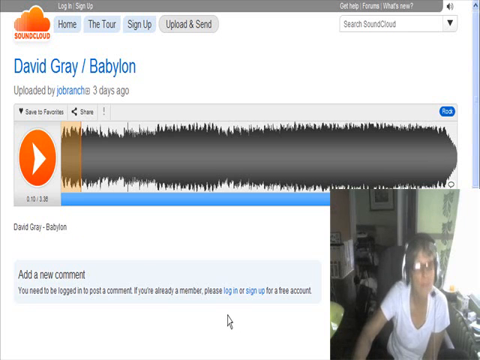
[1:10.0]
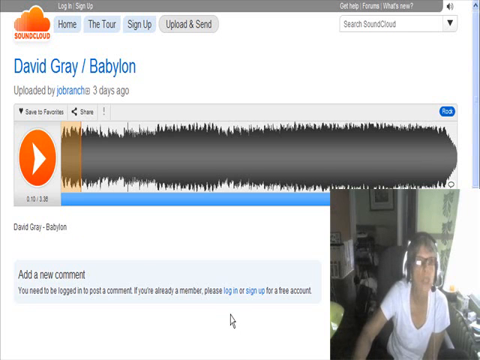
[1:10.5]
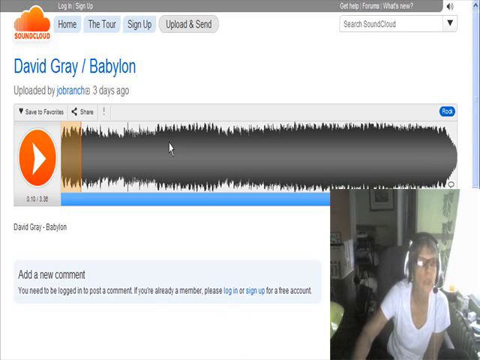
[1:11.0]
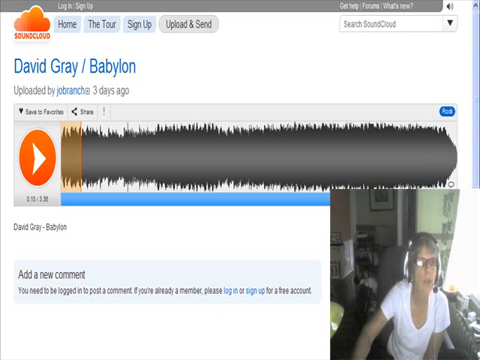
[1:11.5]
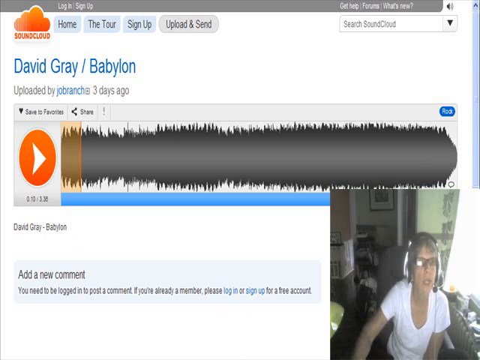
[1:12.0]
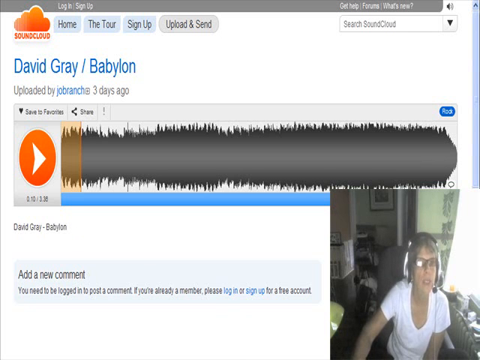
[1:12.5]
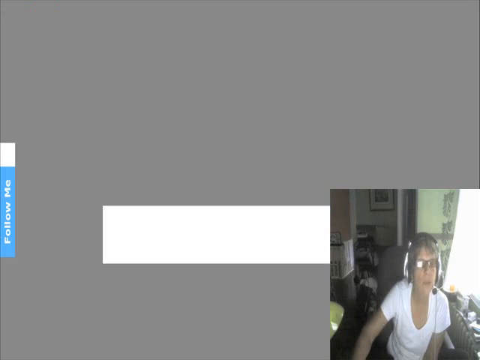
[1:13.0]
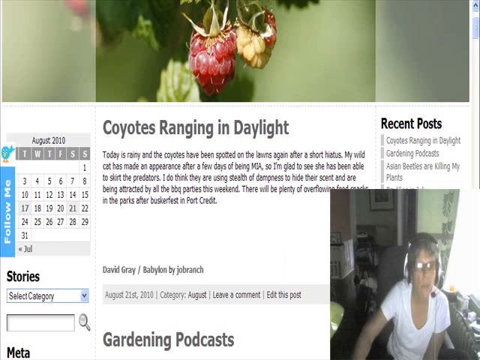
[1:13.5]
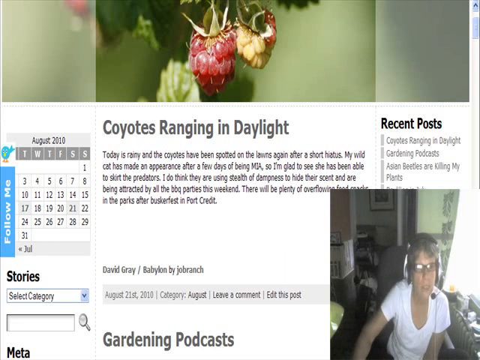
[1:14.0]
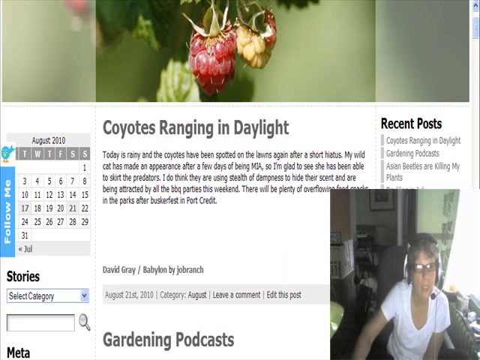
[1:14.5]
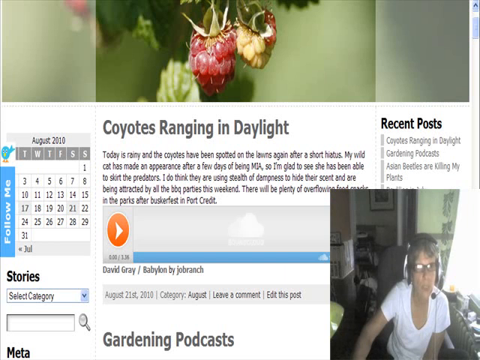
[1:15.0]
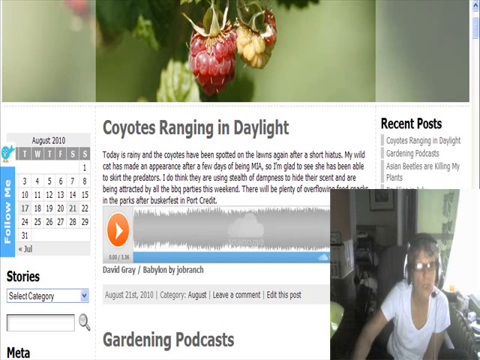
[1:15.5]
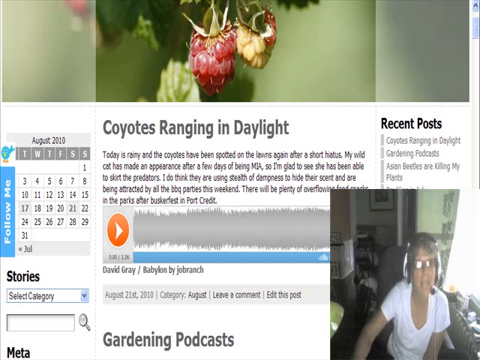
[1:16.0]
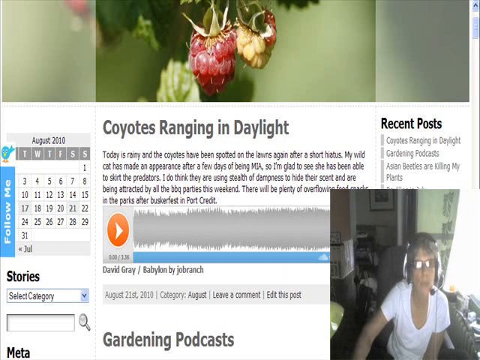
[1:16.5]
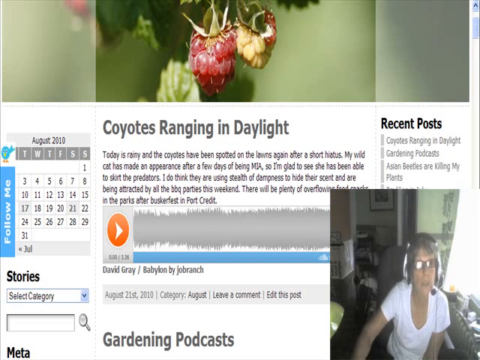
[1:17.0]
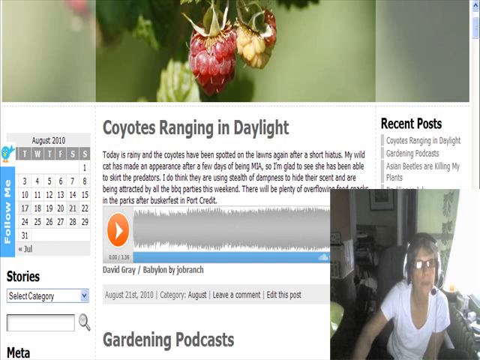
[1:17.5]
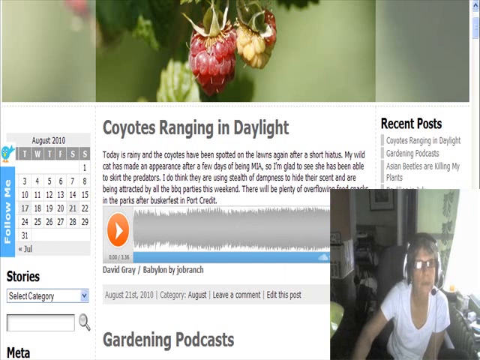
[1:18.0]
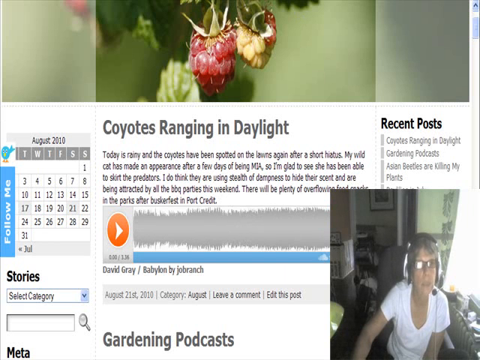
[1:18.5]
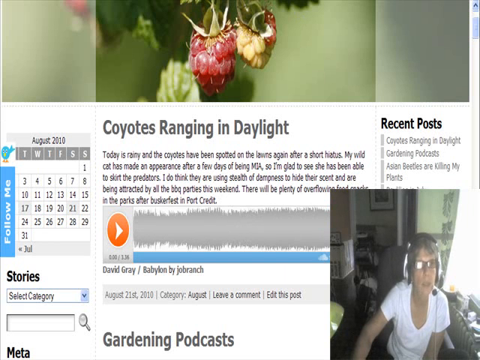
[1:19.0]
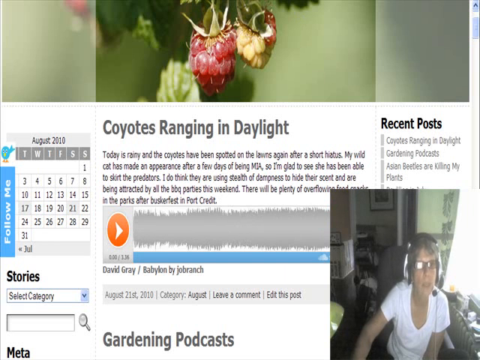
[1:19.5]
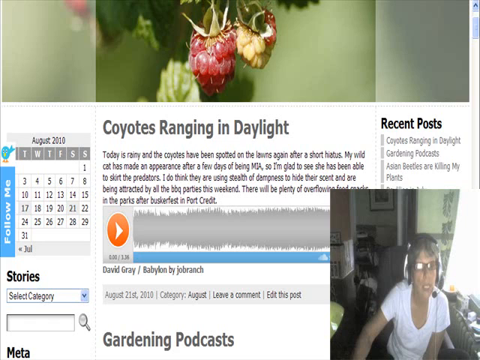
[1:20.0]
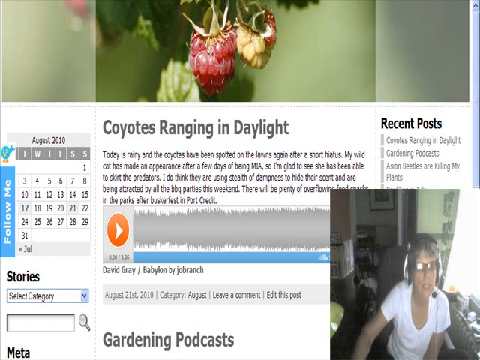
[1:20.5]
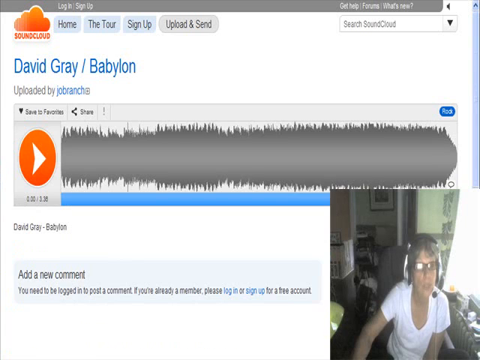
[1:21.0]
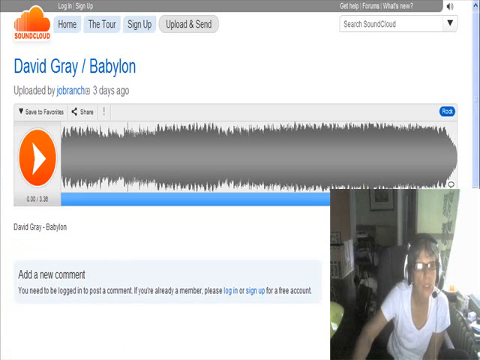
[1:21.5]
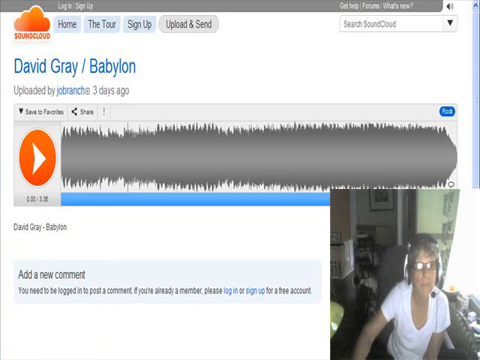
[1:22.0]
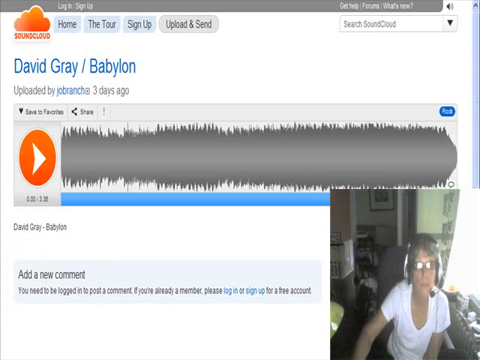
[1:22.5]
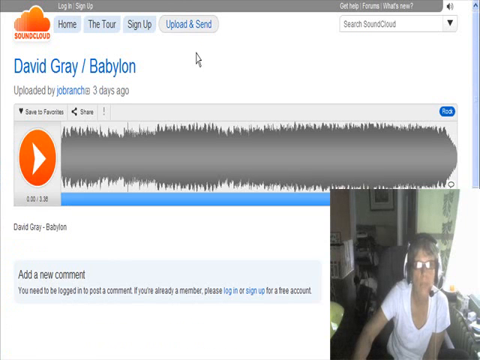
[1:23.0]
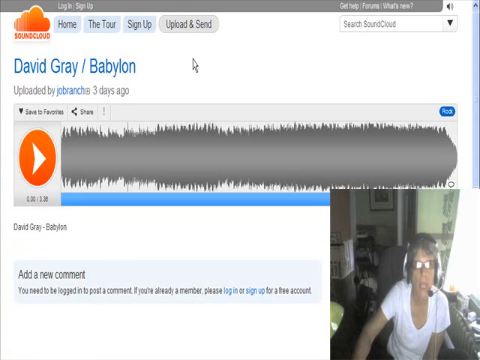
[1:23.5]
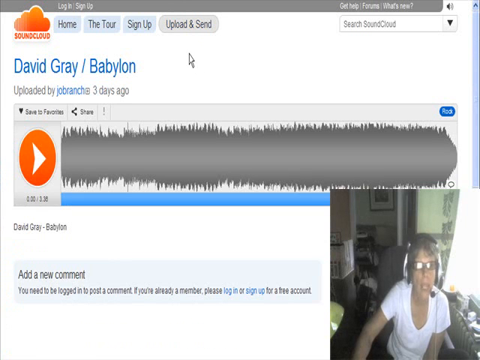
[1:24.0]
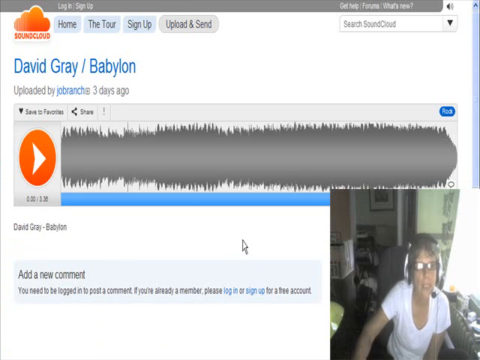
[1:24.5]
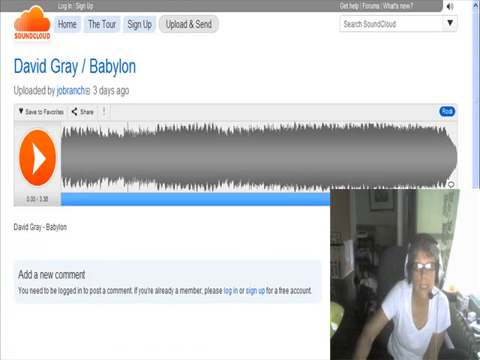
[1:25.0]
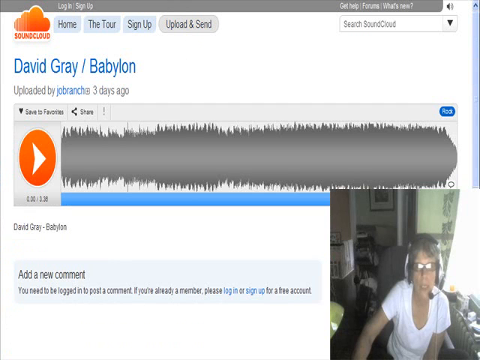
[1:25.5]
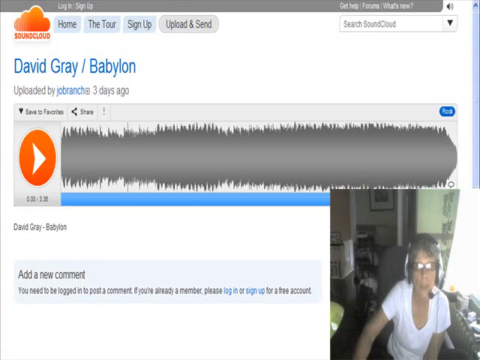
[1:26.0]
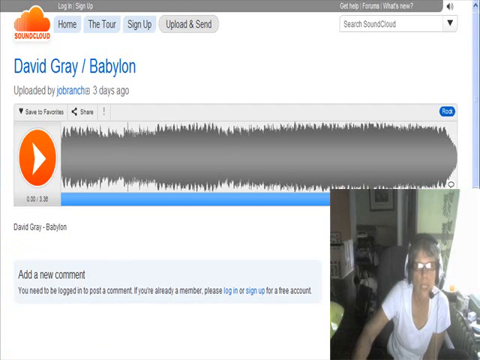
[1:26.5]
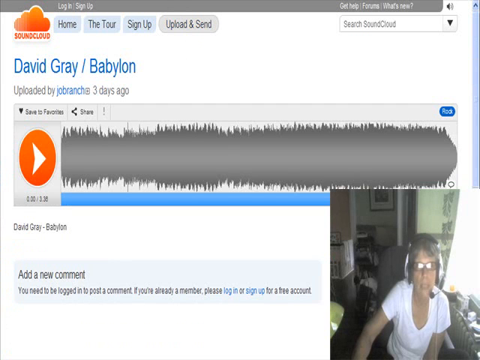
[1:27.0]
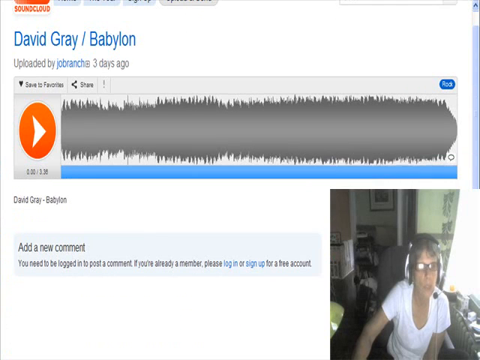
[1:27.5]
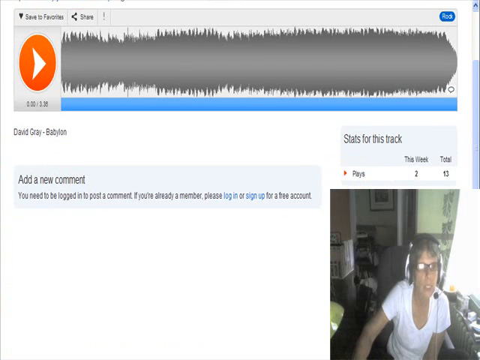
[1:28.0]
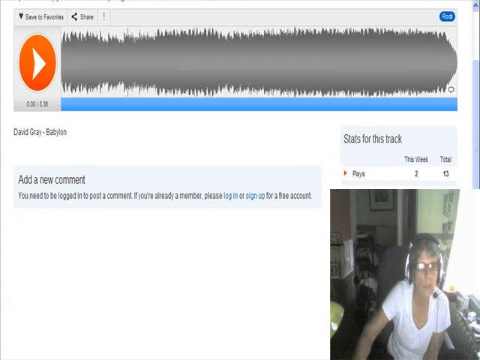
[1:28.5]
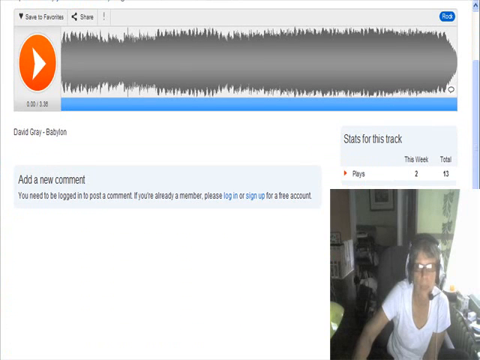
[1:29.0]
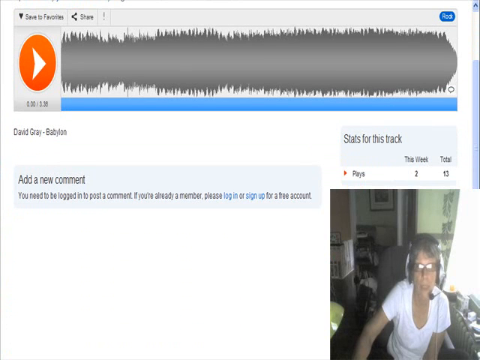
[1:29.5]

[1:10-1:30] As she begins talking, the woman lifts her head slightly, and a light reflection appears in the right lens of her glasses, somewhat obscuring her face, then it switches to both lenses as she speaks. She mainly keeps her head facing forward but tends to move it slightly to the left. Meanwhile, the computer screen shows a series of pages along with her mouse movements: it starts on the sound bar page, goes back to the "coyotes ranging in daylight" page, where she speaks for a moment, then switches back to the "David Gray / Babylon" sound bar page. In the upper left-hand corner is the SoundCloud logo with the orange cloud. As she moves her head to the left and back to center, she scrolls down the page to an area with more text.